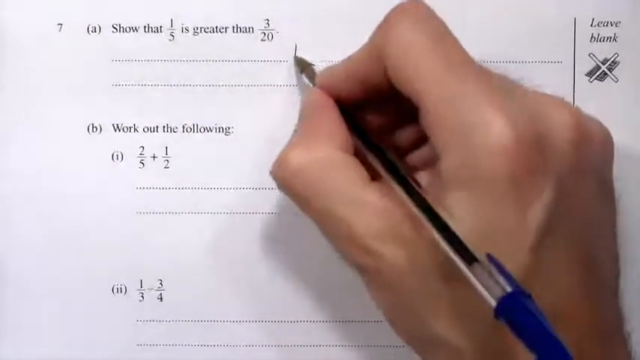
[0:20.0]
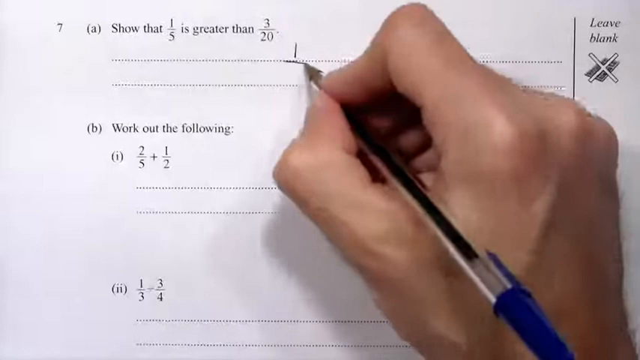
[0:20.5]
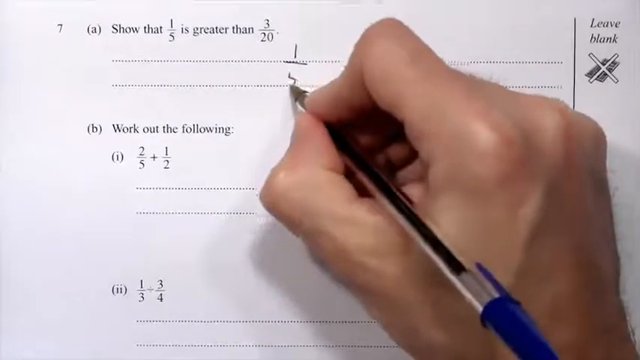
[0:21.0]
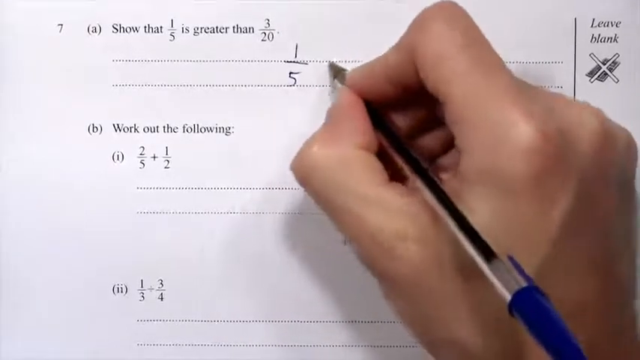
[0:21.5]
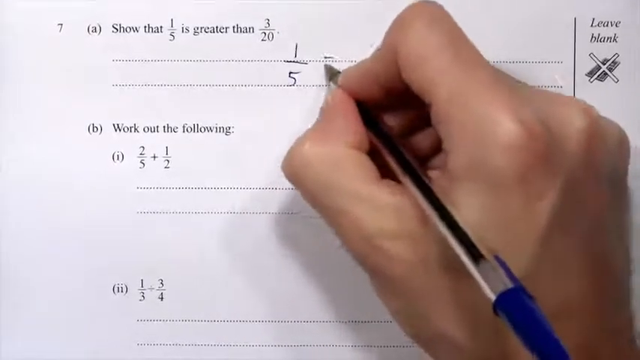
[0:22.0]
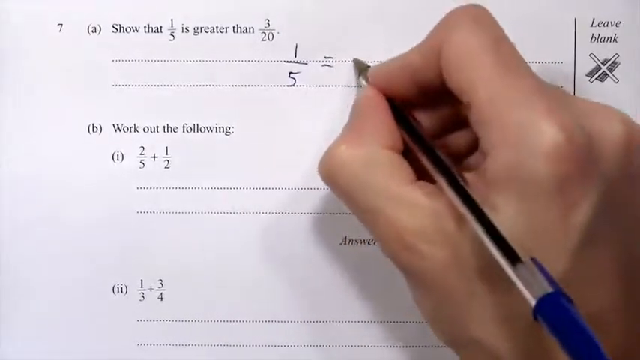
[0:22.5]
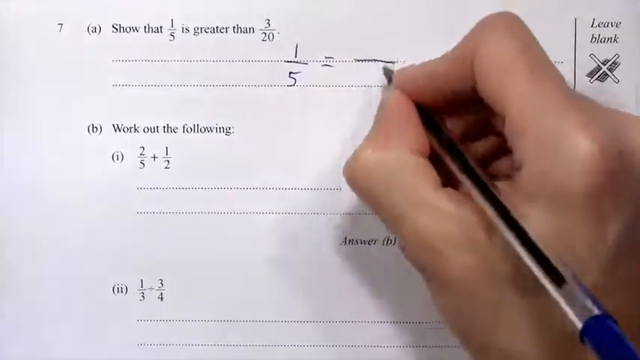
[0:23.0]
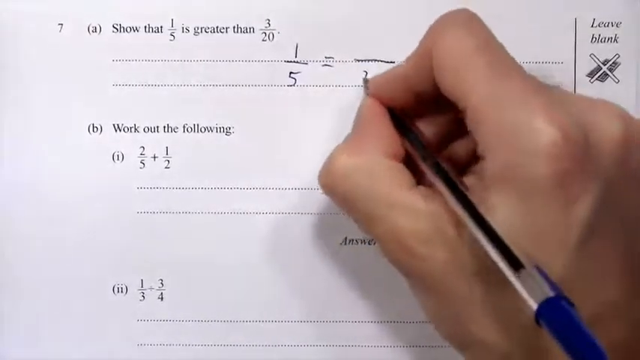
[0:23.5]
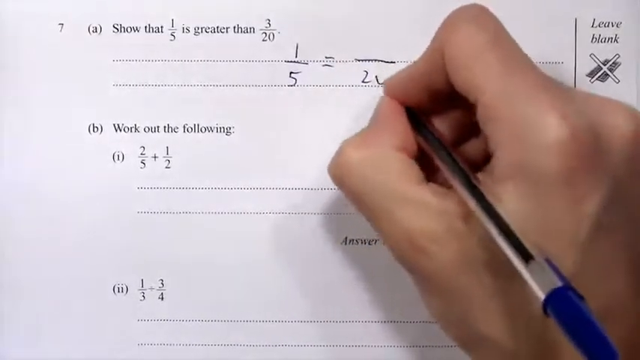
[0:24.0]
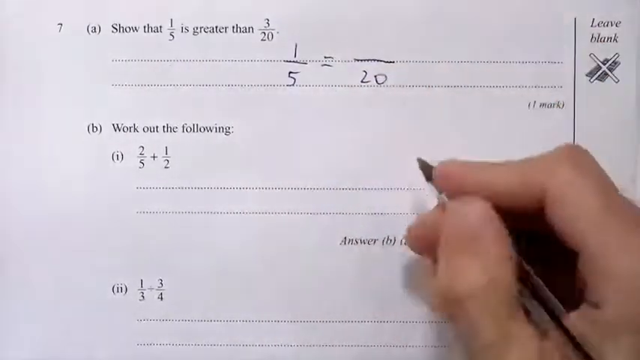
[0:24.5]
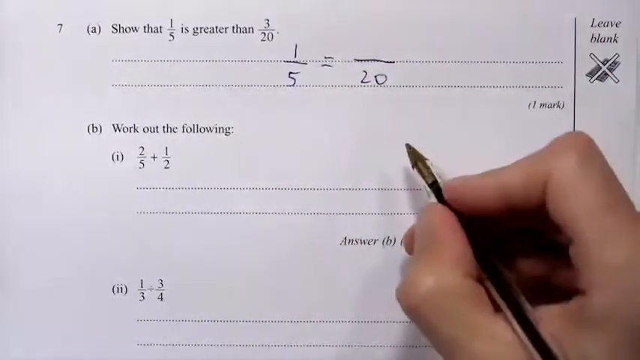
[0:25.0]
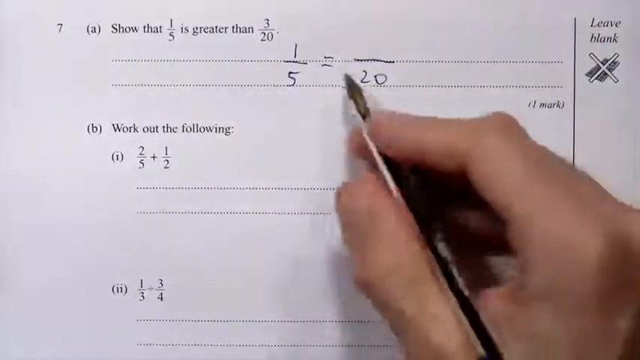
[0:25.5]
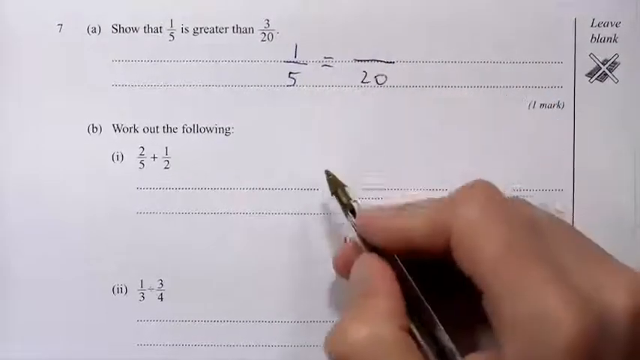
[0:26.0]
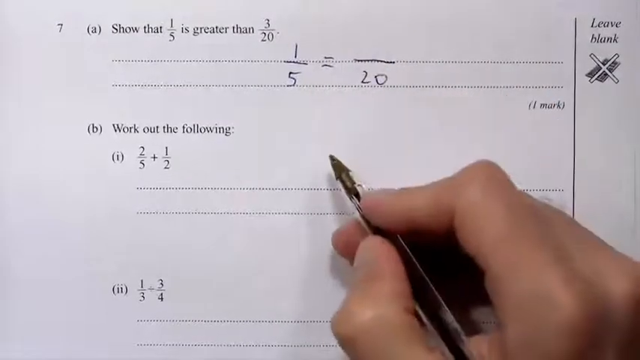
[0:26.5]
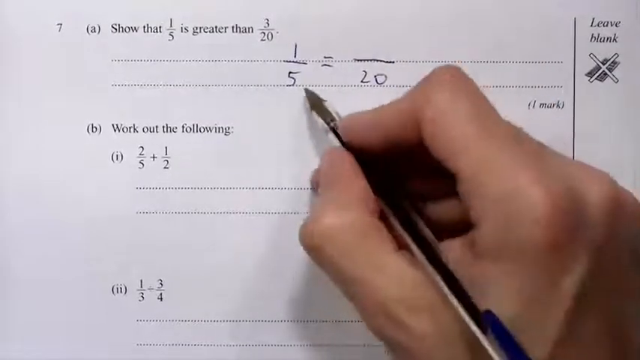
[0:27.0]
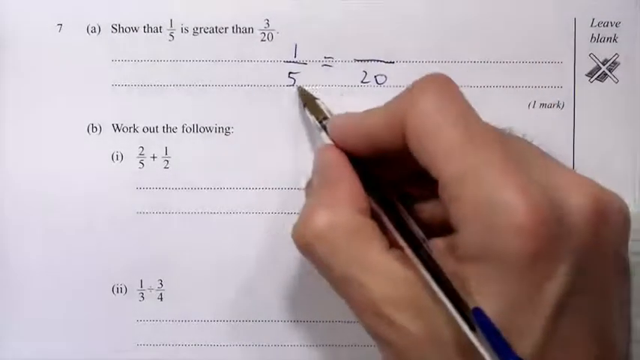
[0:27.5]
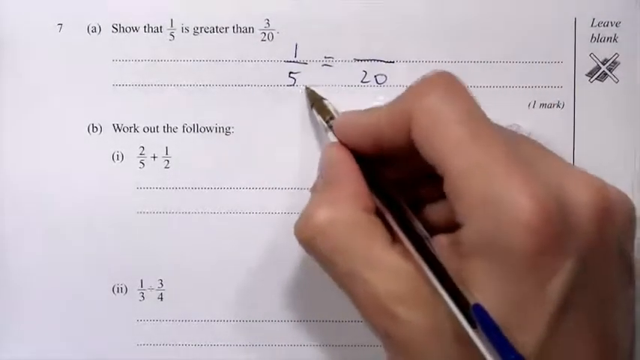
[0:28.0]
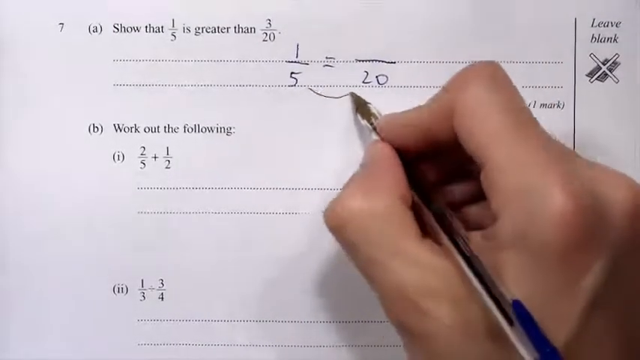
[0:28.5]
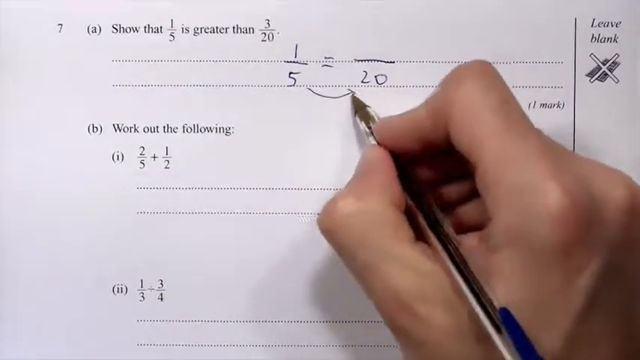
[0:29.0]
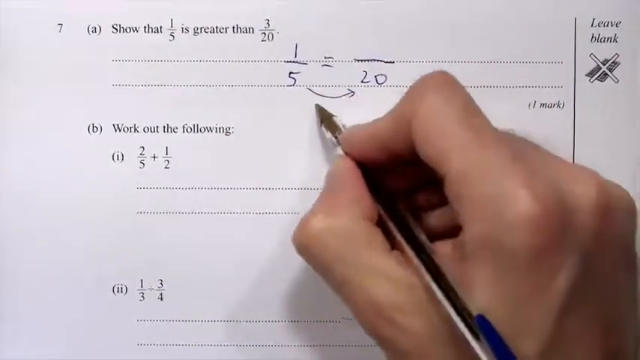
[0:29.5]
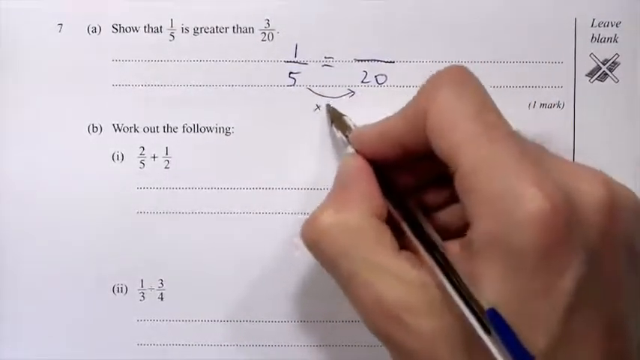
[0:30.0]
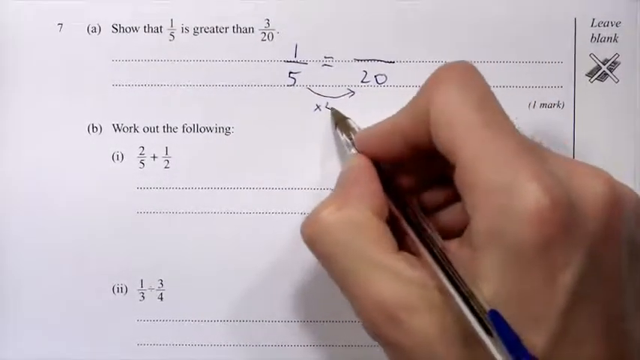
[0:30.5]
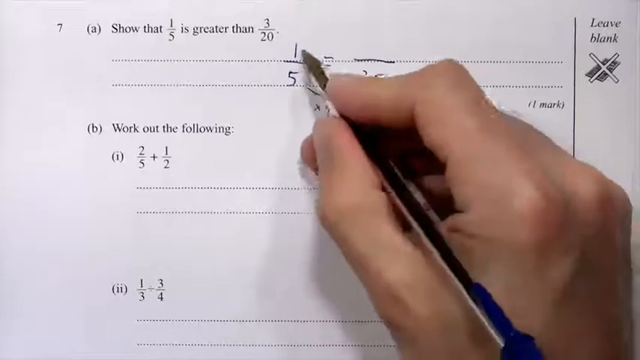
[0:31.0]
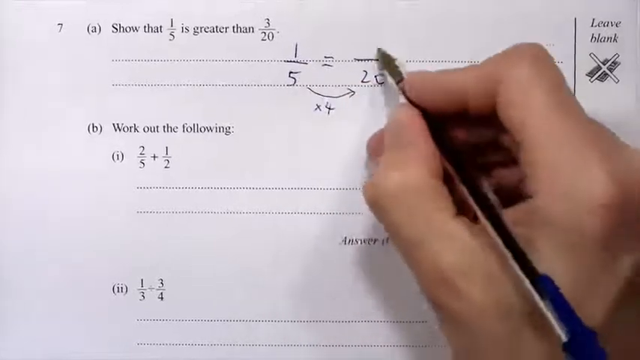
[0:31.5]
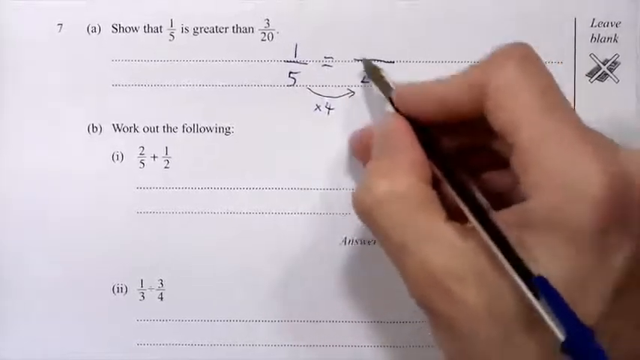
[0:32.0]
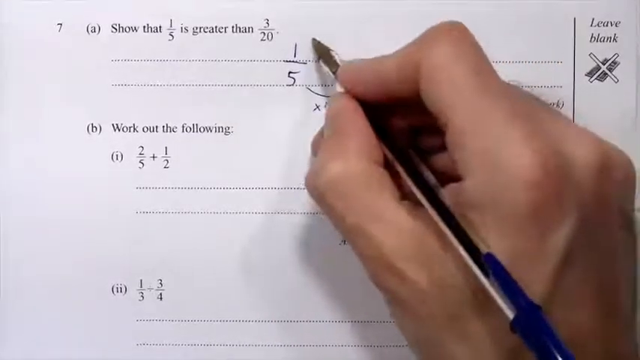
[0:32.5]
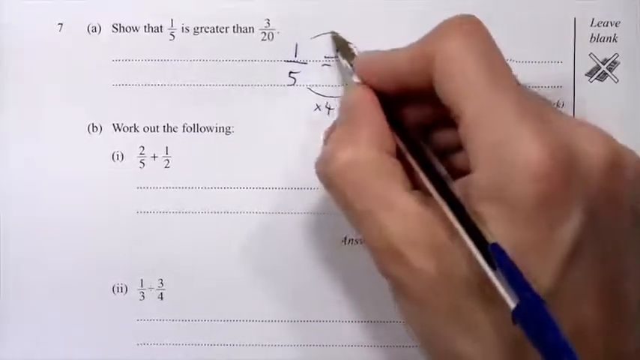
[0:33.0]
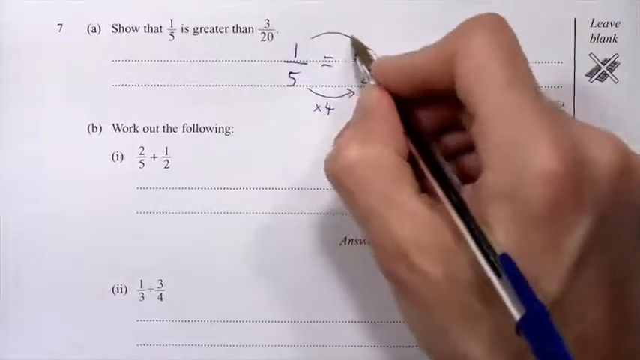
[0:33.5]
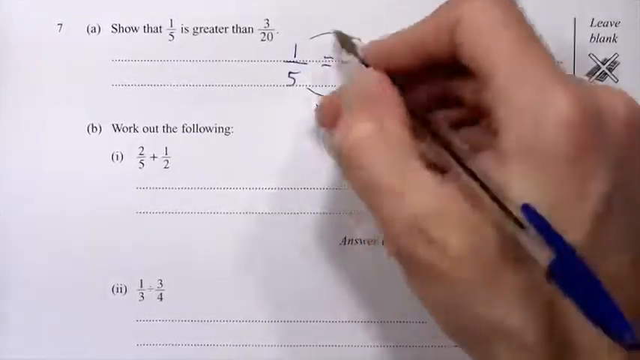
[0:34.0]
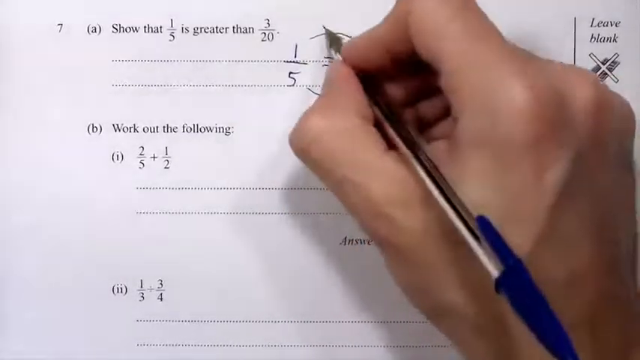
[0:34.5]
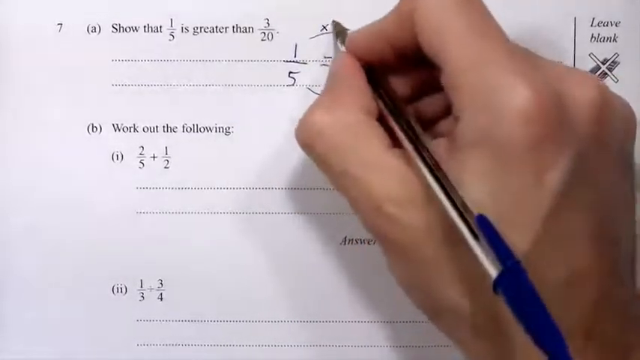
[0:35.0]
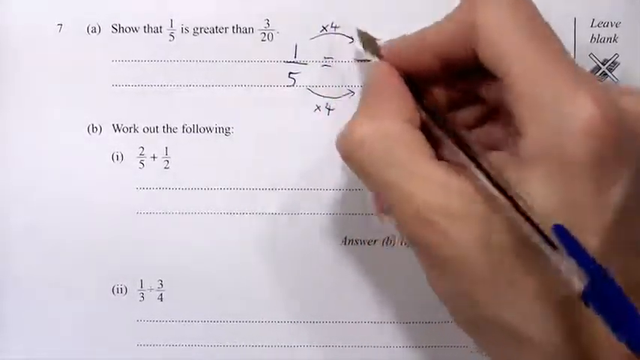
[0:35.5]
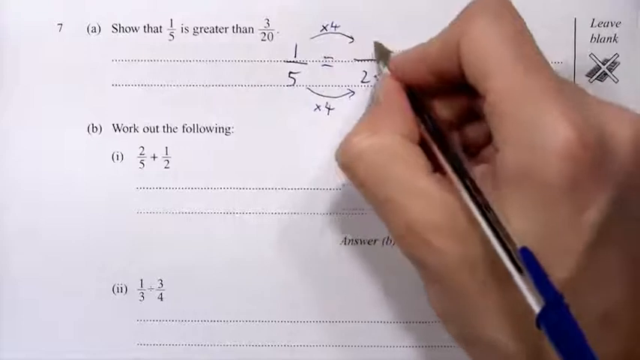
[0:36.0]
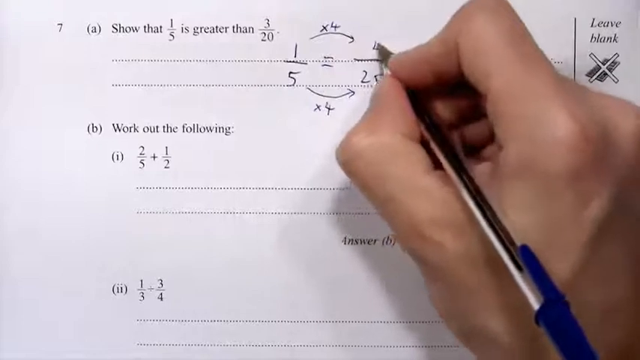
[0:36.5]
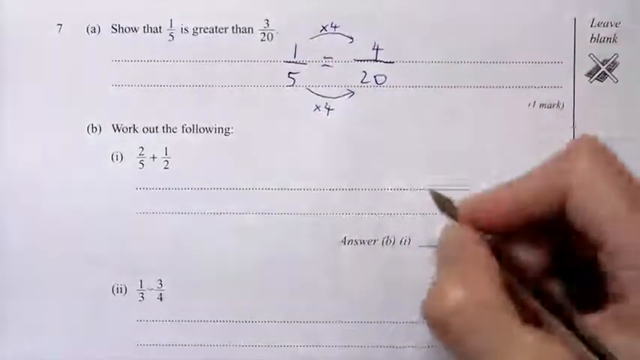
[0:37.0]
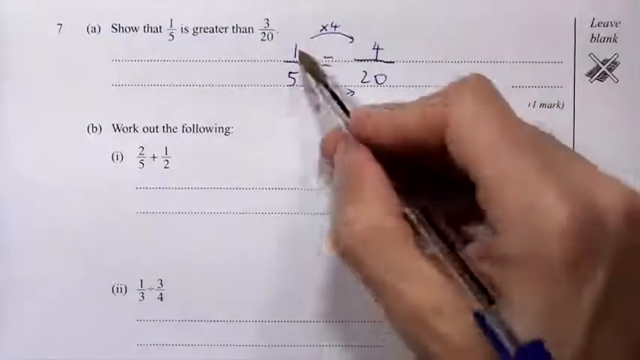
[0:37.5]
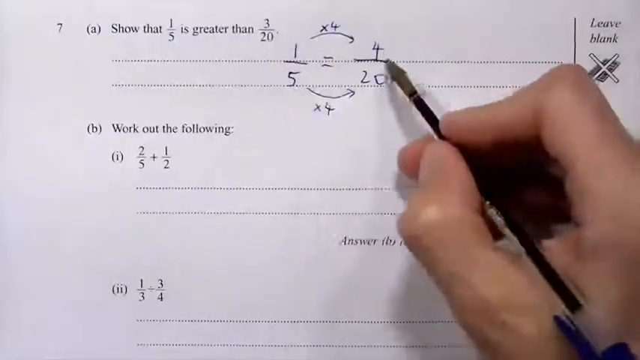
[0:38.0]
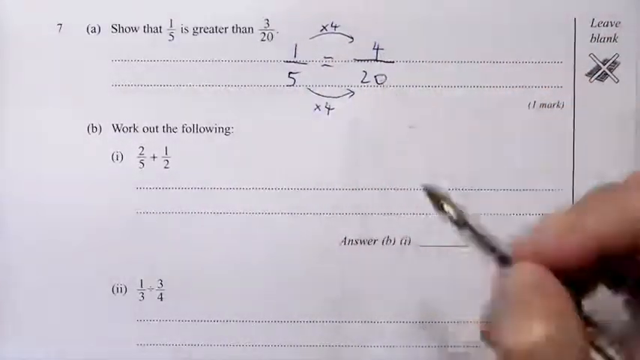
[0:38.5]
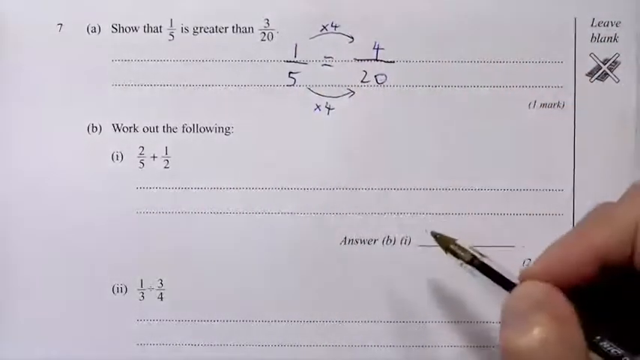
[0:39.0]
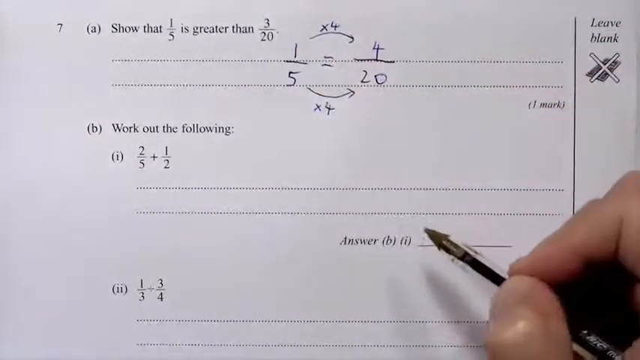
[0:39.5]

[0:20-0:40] Someone works through the problem by hand. The first step apparently rewrites the fraction: 1/5 is written down, and because 5 goes into 20 four times, apparently 4/20 is written, with each part multiplied by 4. The person working, seemingly an instructor, appears to be showing the steps one at a time.